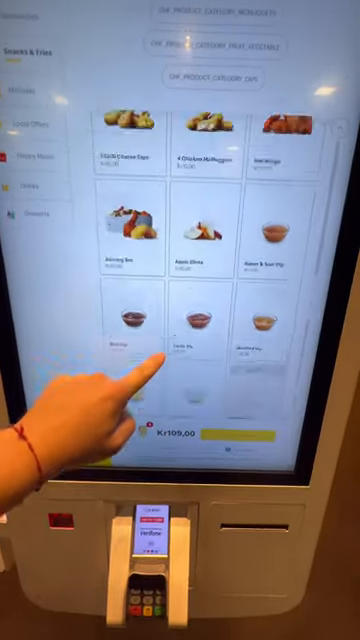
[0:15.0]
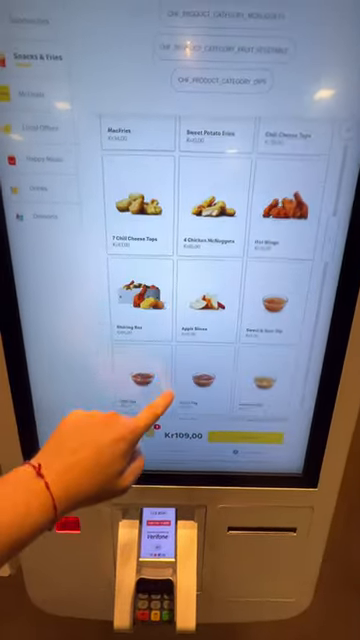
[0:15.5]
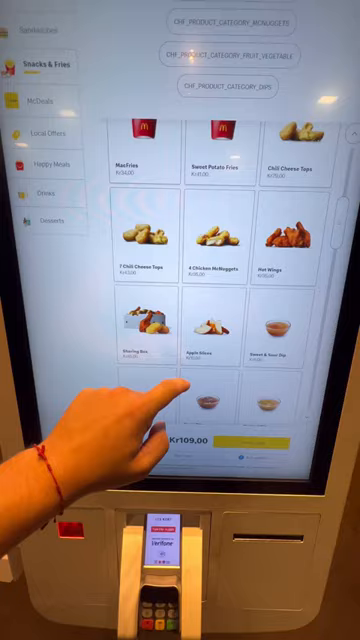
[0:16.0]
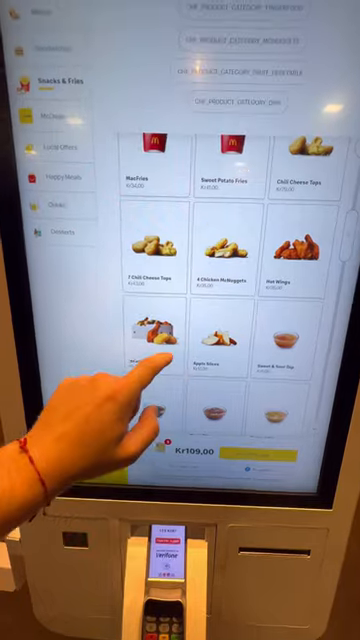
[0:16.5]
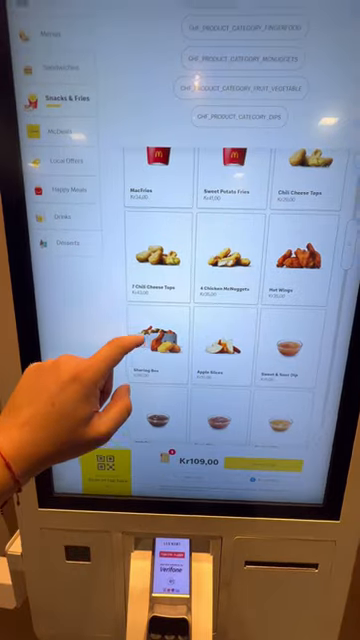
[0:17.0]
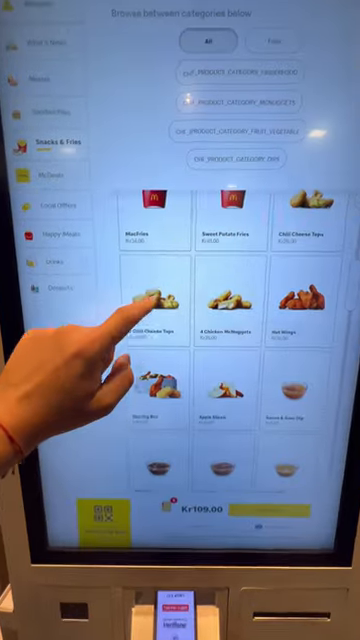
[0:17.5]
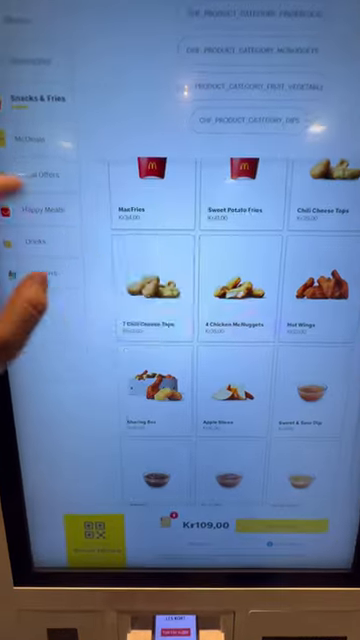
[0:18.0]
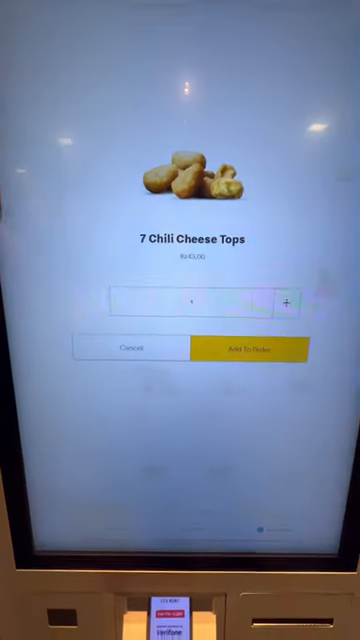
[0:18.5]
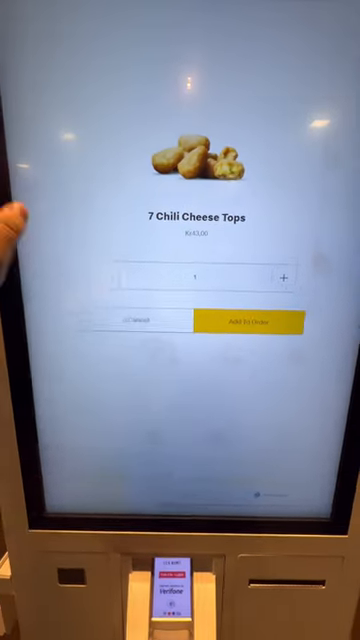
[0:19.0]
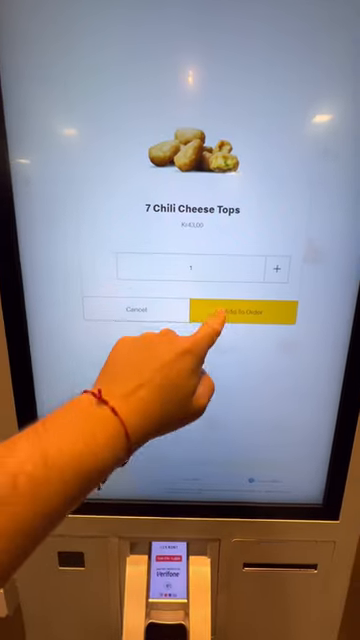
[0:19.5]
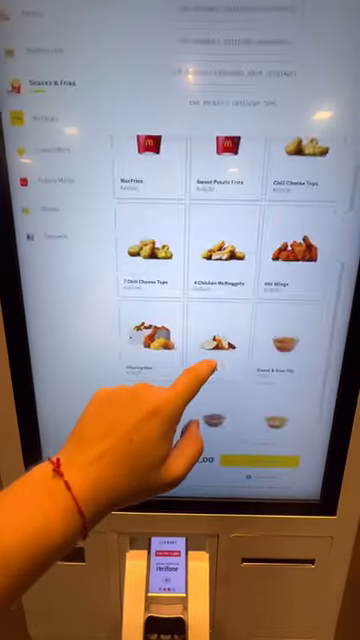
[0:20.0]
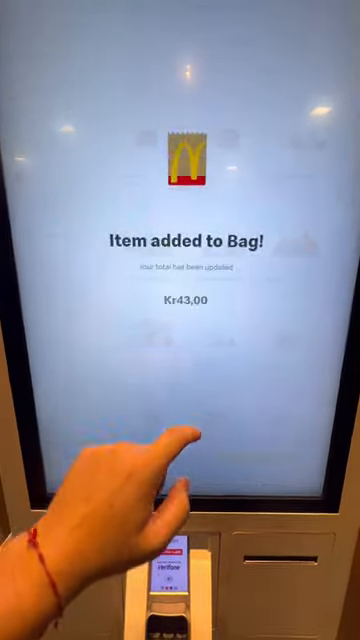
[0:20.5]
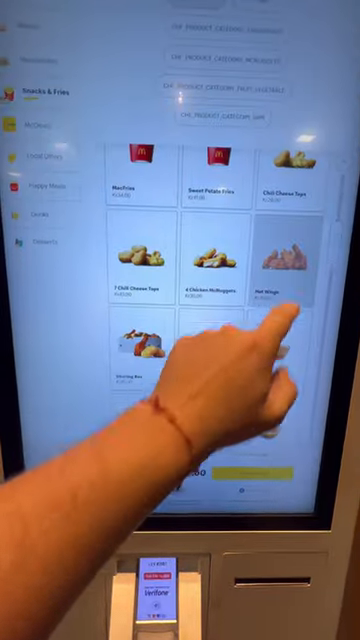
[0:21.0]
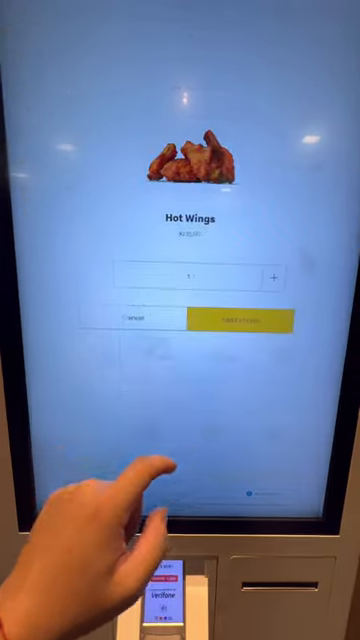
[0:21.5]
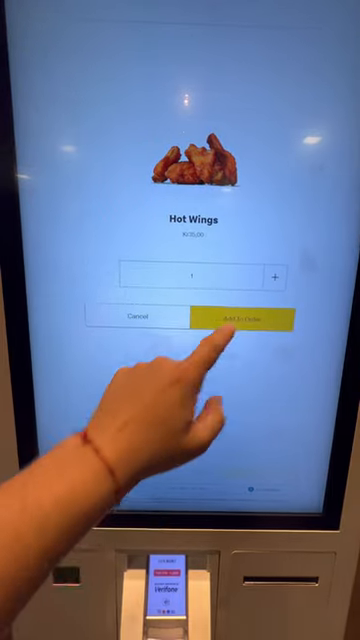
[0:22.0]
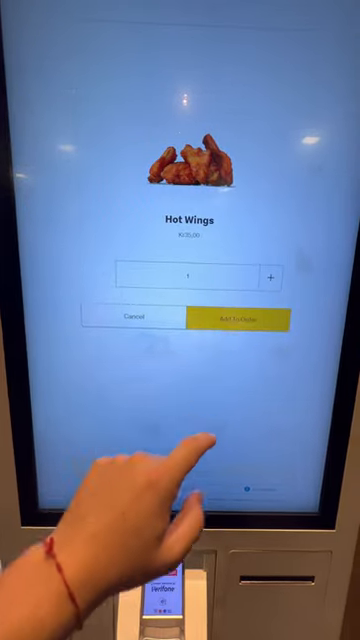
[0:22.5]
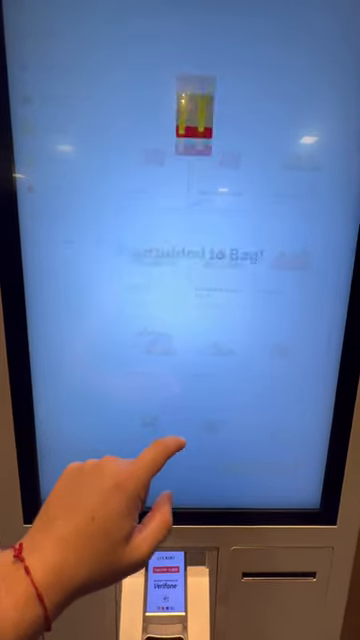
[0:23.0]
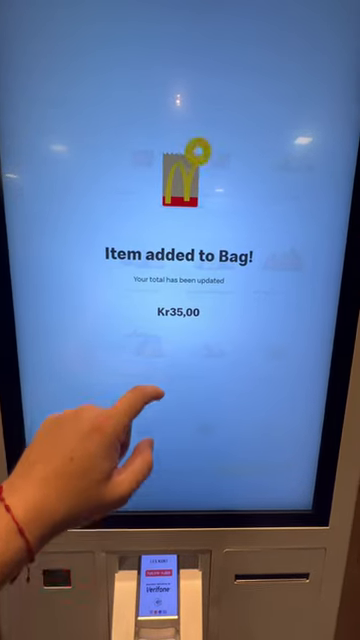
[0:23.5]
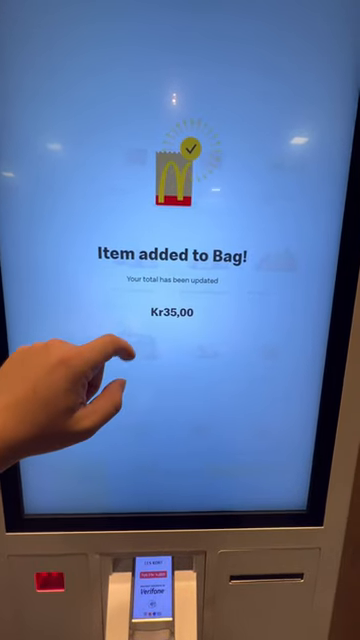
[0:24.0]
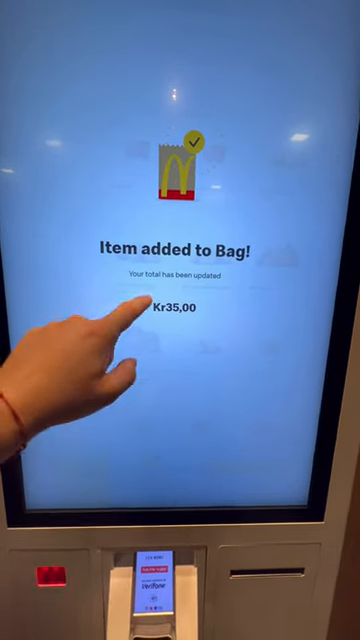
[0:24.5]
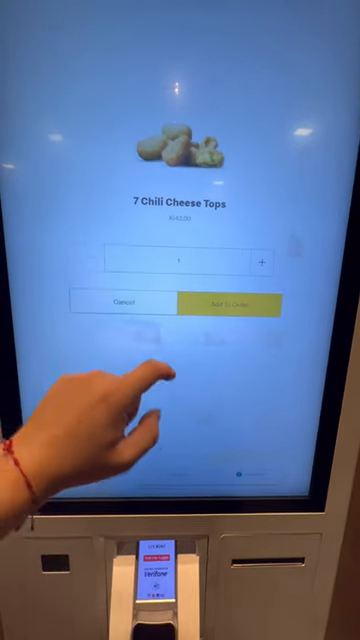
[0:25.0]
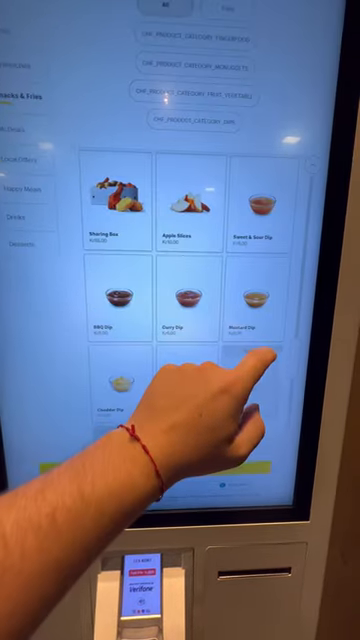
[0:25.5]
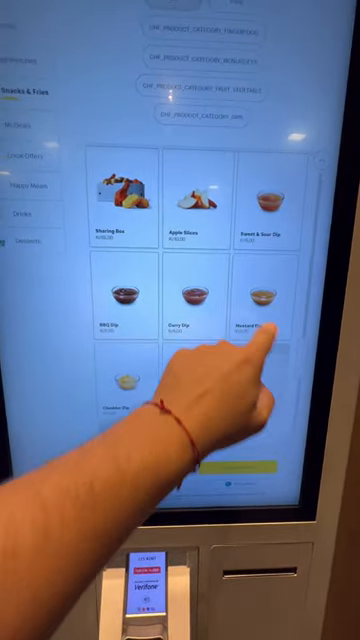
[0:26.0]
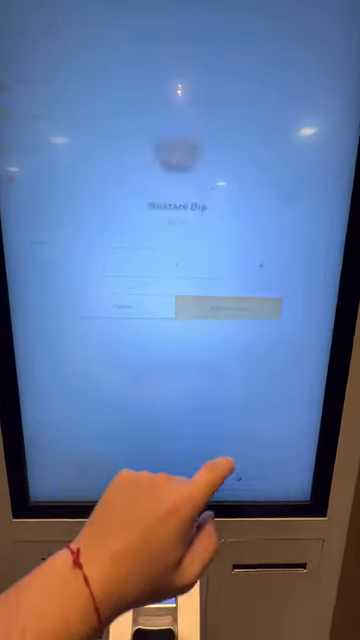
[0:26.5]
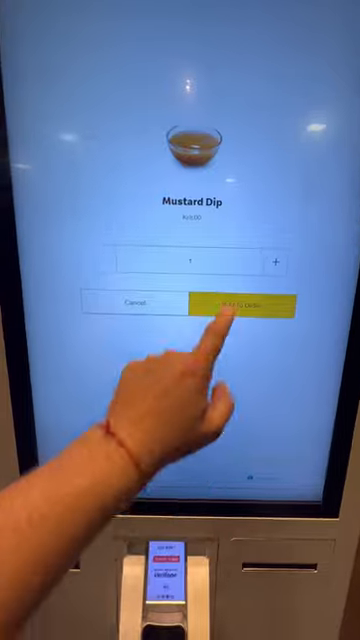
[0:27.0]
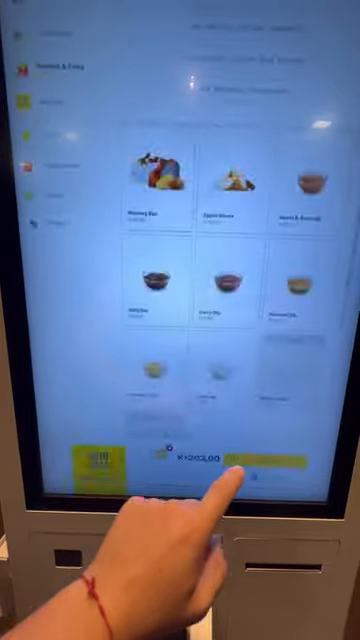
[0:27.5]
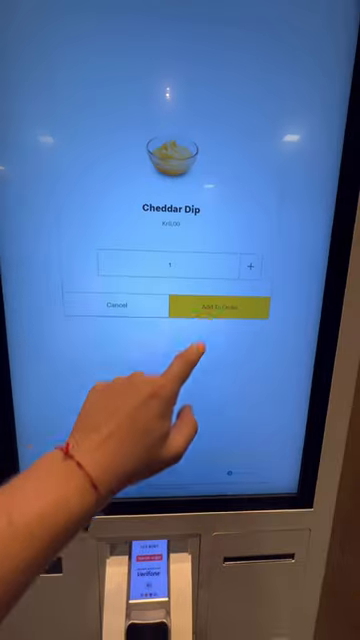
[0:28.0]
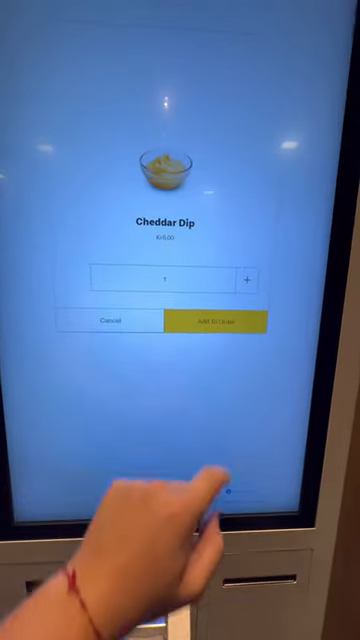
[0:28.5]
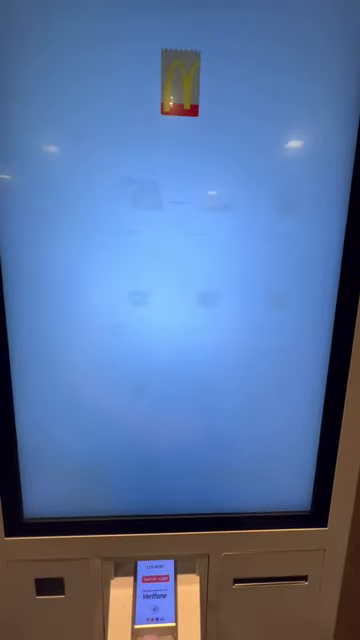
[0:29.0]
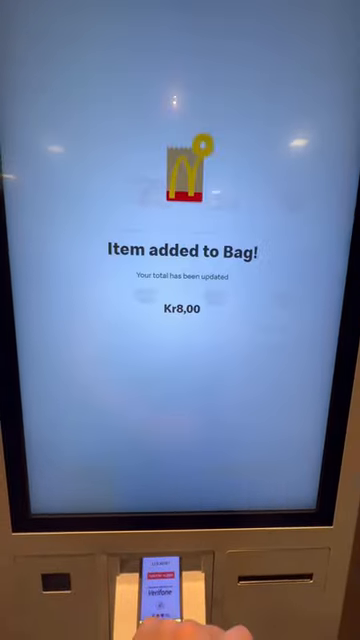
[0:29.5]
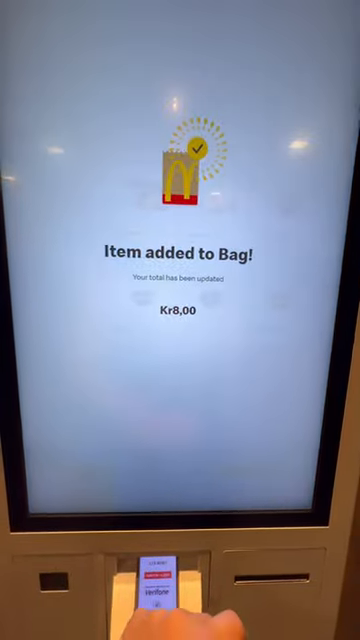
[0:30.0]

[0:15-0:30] A hand scrolls up on the kiosk screen at a McDonald's, looking through food items such as chicken nuggets and sauce, with some menu items on the side. The hand touches an option that looks like chicken nuggets, but once tapped the screen says "seven chili cheese tops," with a price in a currency starting with "KR". A yellow button that says "add to order" is pressed, and the screen says "added to bag". The scene cuts back to the list of food, hot wings are tapped and added to the order, and the screen says "item added to bag" and "your total has been updated," with the total showing "KR 35,00". Another seven chili cheese tops is tapped, mustard dip is added with the "add to order" button, and cheddar dip is also added to the order. The screen says "item added to bag" and "your total has been updated," showing "KR 8,00".